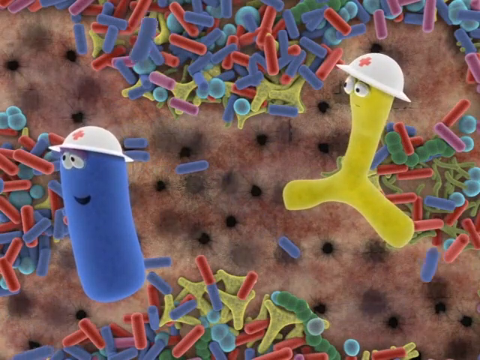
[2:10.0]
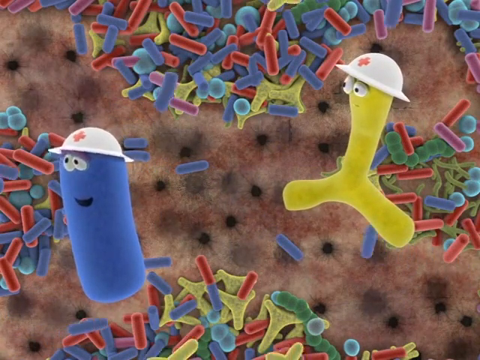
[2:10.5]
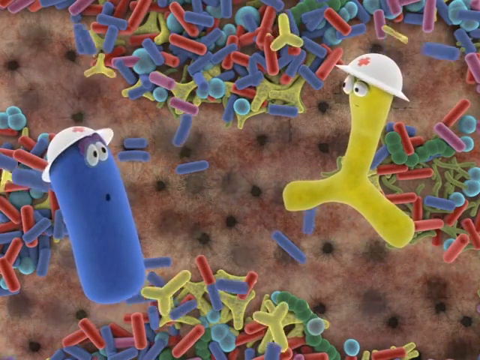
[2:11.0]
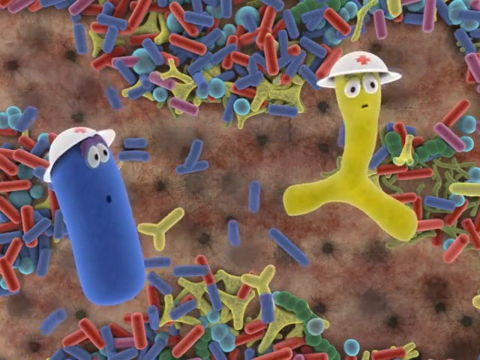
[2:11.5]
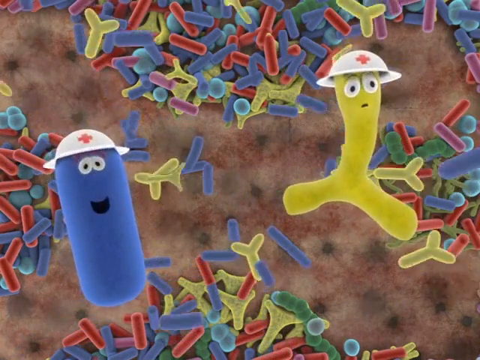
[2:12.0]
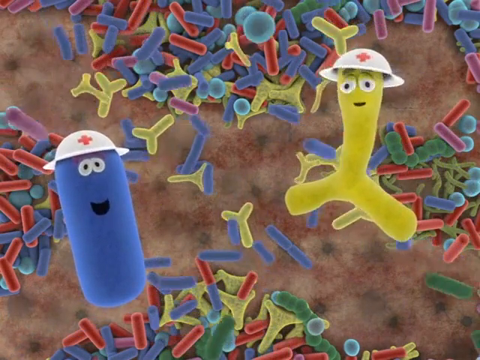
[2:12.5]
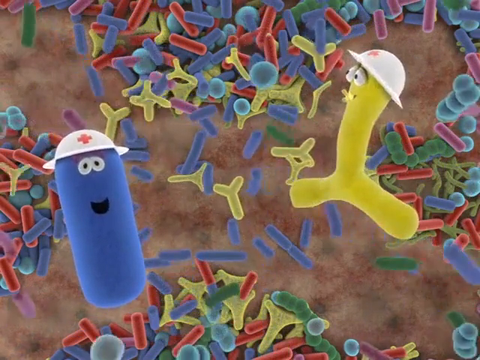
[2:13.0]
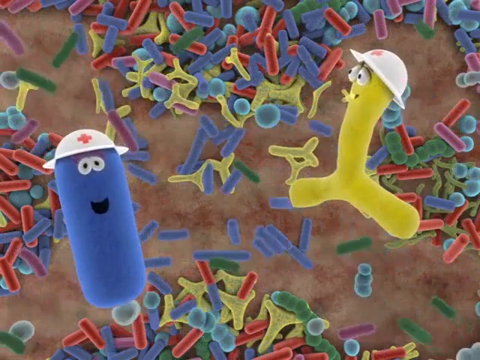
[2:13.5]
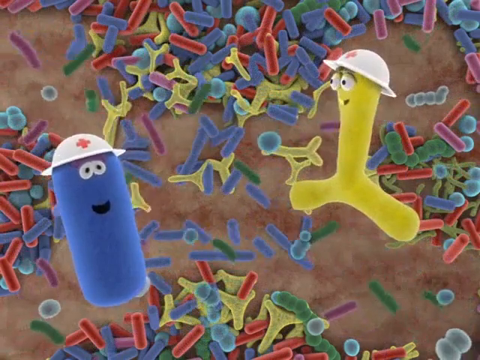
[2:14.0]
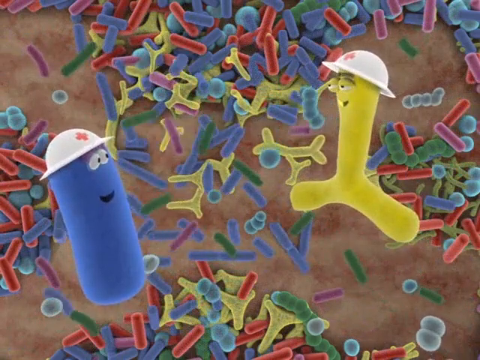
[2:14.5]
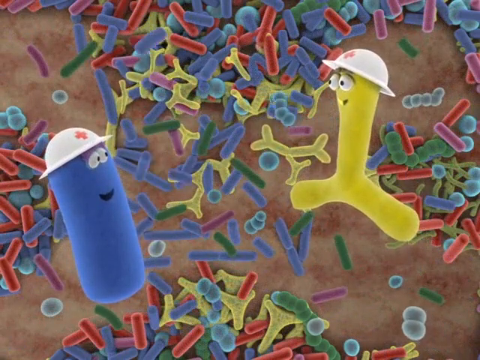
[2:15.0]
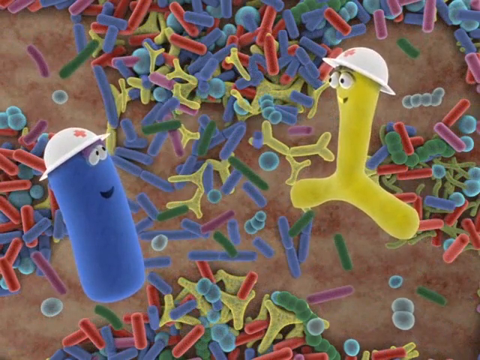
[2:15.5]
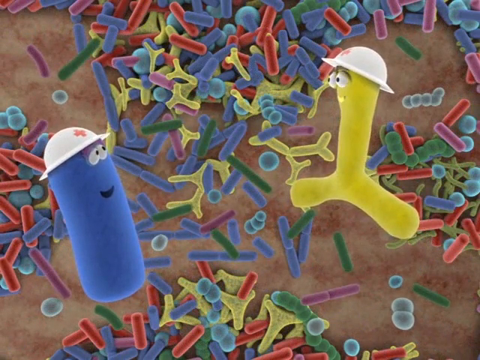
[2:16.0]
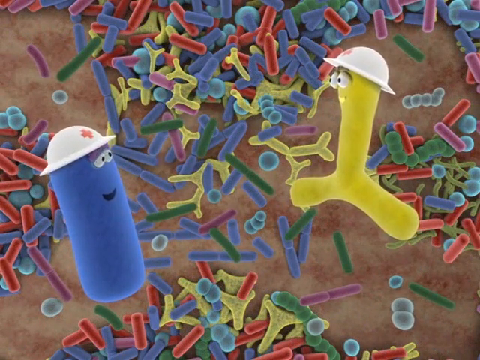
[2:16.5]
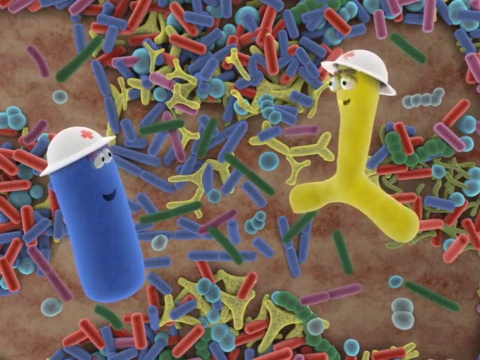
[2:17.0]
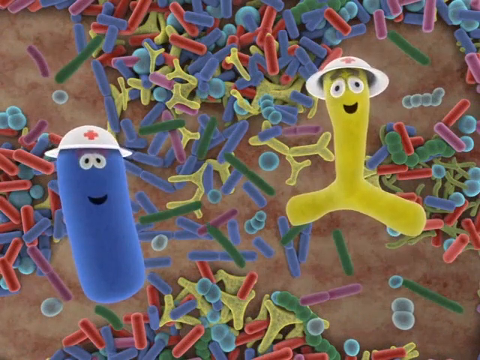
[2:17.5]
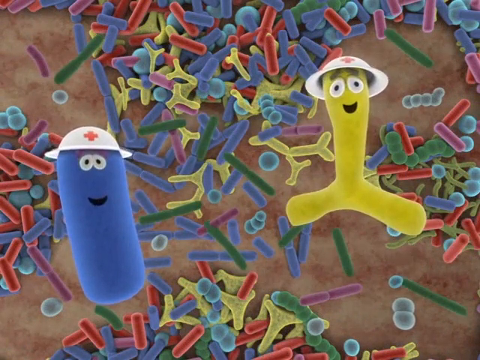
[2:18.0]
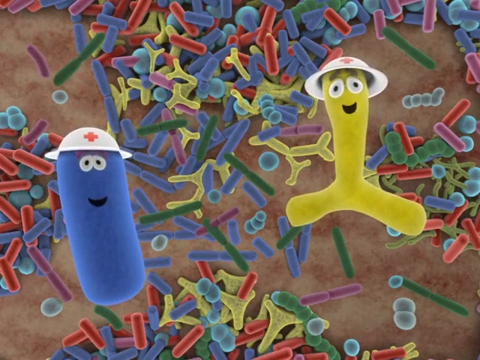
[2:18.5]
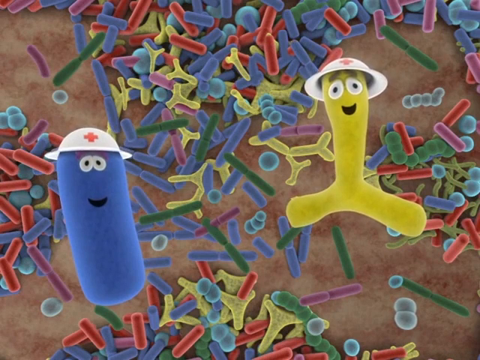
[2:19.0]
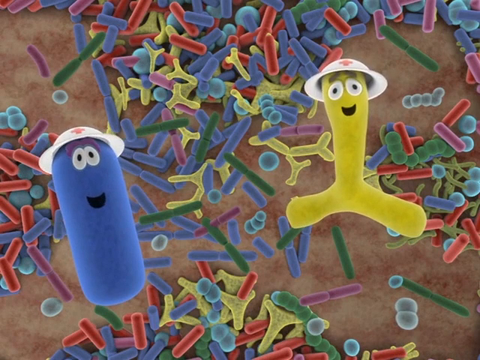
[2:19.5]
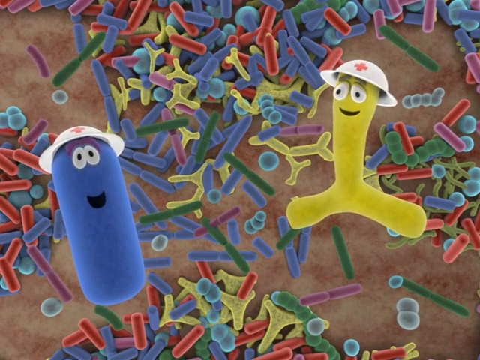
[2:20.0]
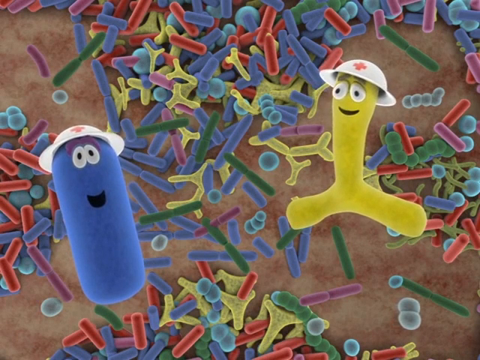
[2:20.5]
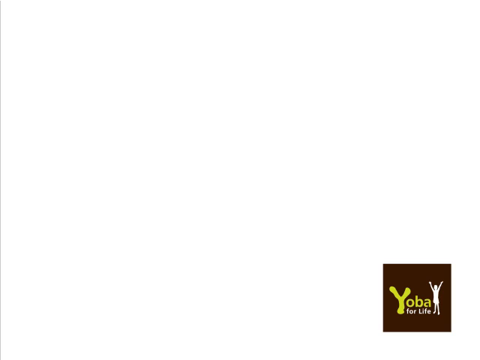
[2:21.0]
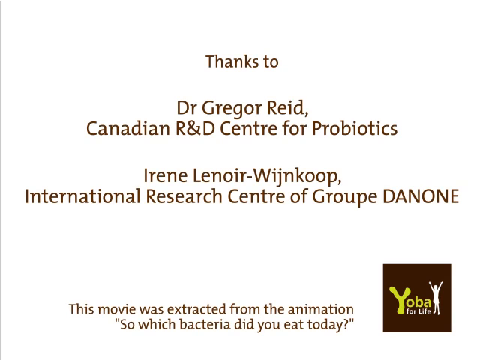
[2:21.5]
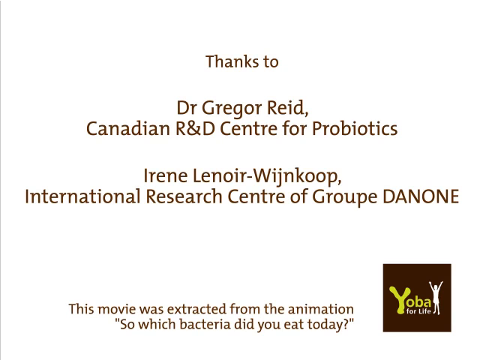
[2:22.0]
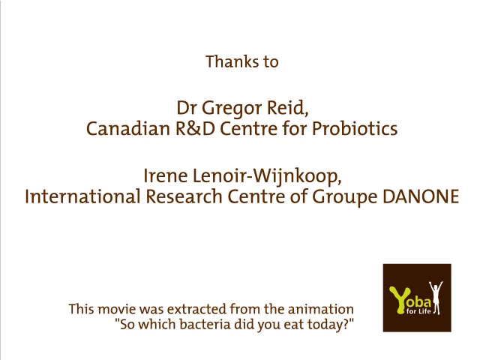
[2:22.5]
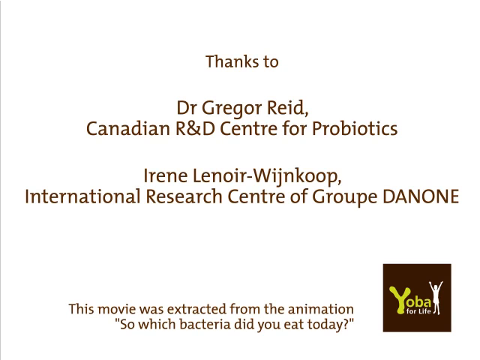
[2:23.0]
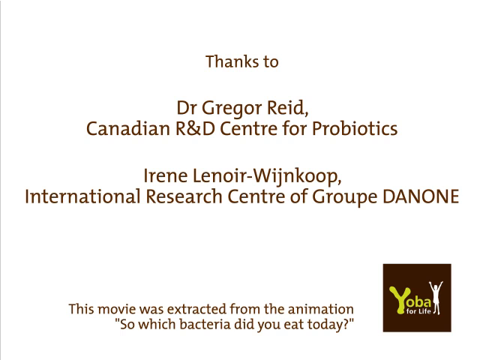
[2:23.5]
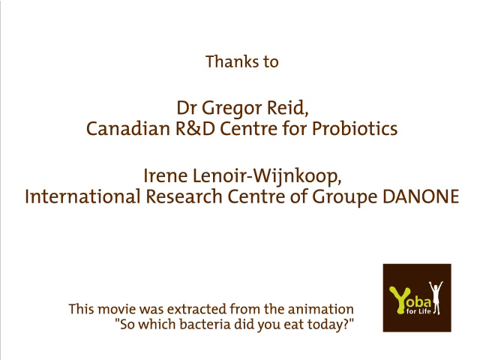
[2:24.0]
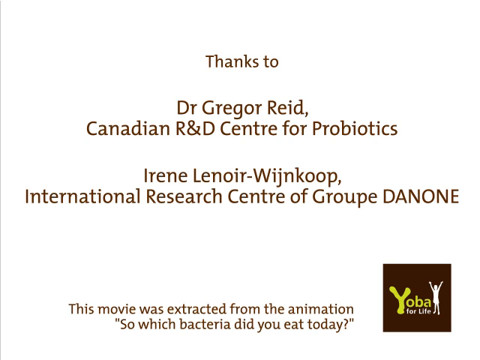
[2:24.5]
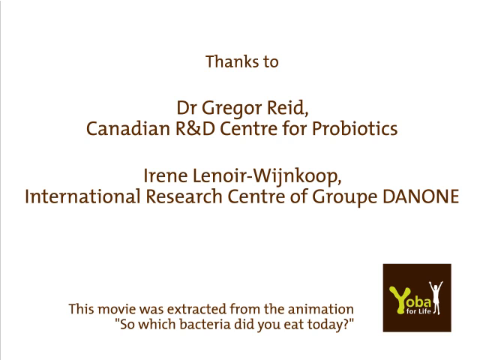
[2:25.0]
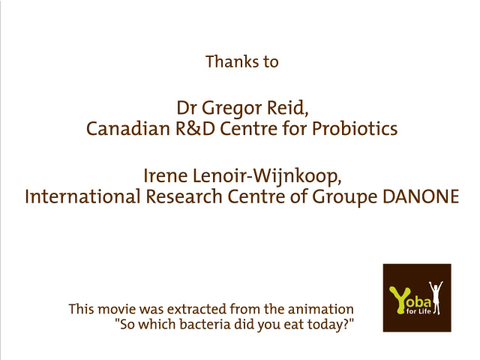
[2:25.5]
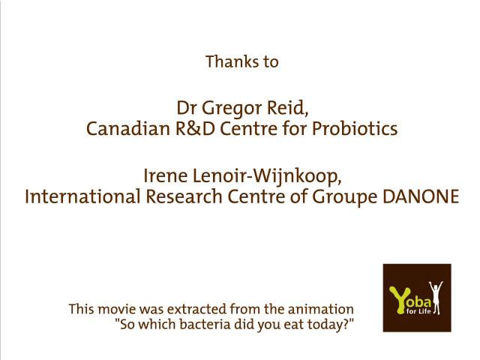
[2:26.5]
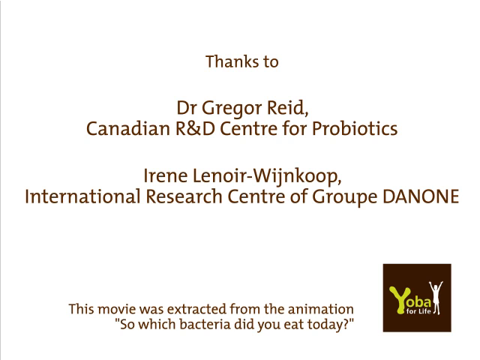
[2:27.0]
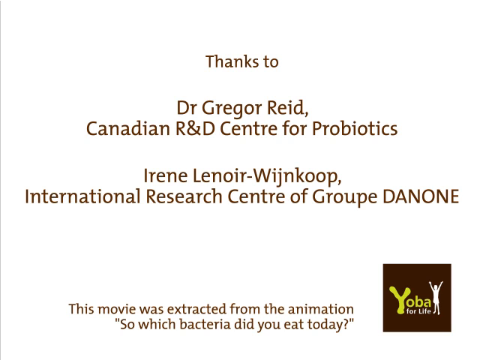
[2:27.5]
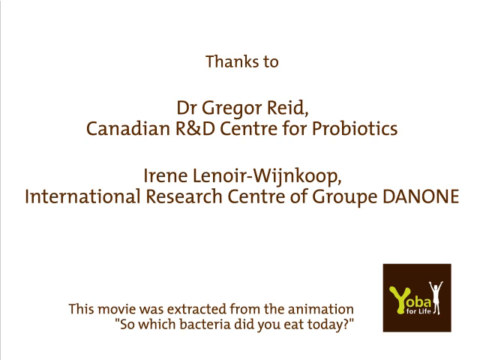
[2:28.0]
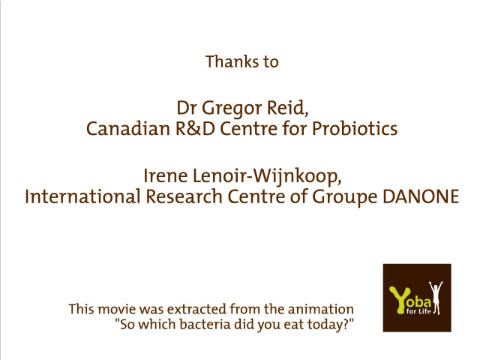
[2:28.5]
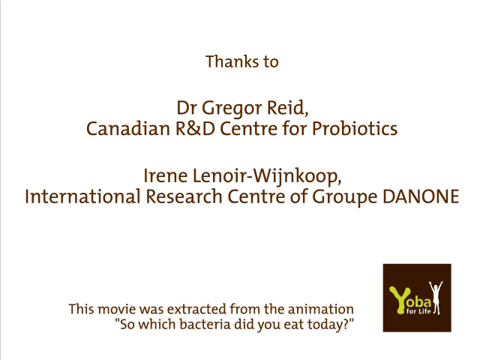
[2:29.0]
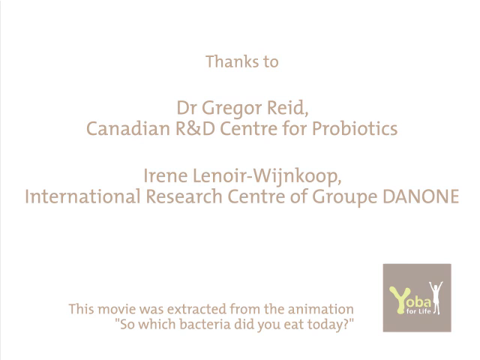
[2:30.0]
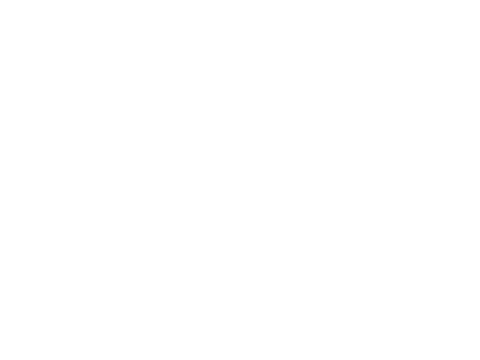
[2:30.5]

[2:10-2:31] Both probiotics look to the left, then the blue one looks at the yellow one, and both look toward the viewer. The yellow probiotic looks to the left, and the blue one turns around toward the center, so both are looking toward the center behind them. Behind them, many colorful probiotics appear to be covering holes inside the intestines. Both probiotics, the blue on the left and the yellow on the right, then look toward the viewer, very happy and smiling. The screen turns to a white background with captions reading "thanks to Dr. Gregor Reid, Canadian Research and Development Center for Probiotics." Captions at the bottom read "this movie was extracted from the animation. So which bacteria did you eat today?" and the Yoba for life logo is in the bottom right corner.